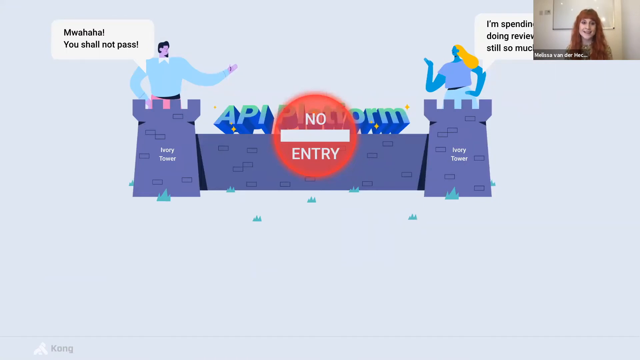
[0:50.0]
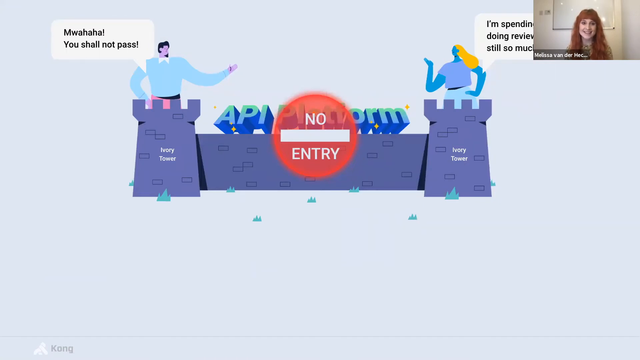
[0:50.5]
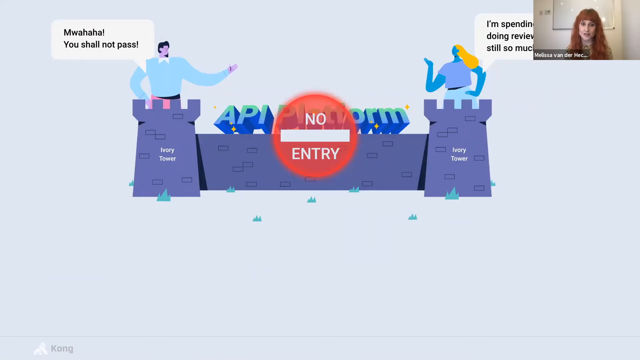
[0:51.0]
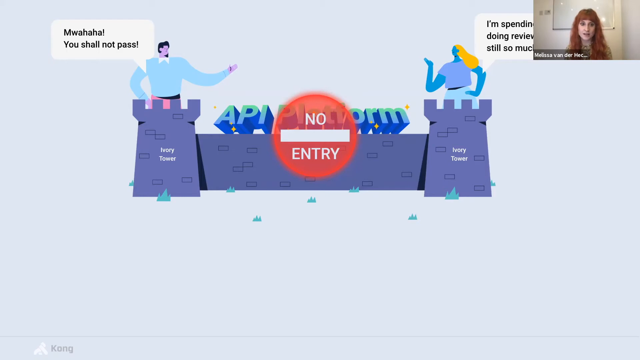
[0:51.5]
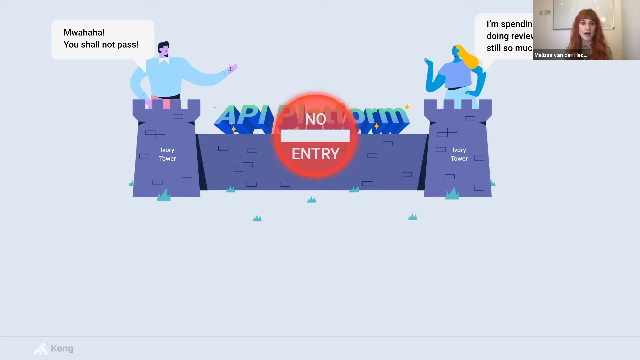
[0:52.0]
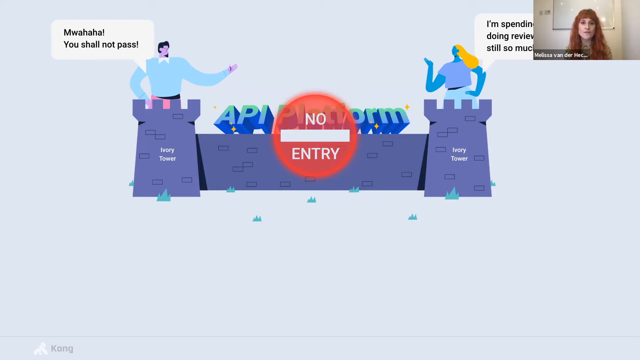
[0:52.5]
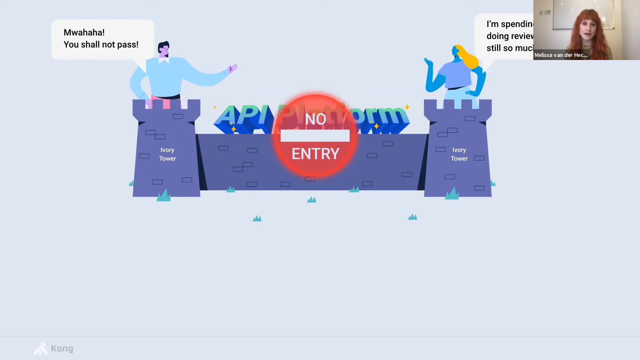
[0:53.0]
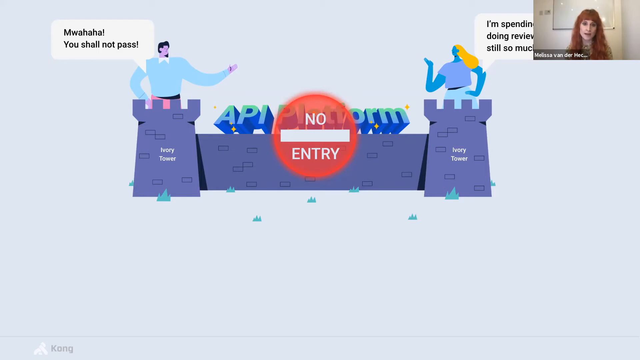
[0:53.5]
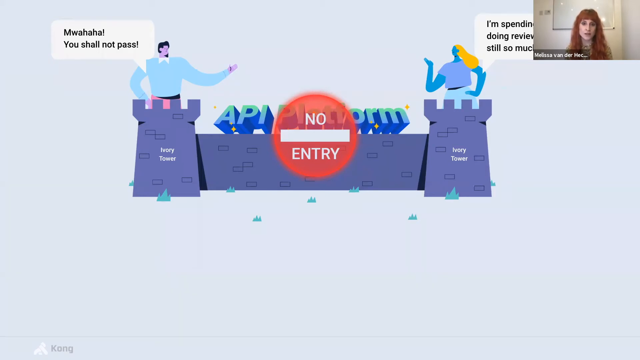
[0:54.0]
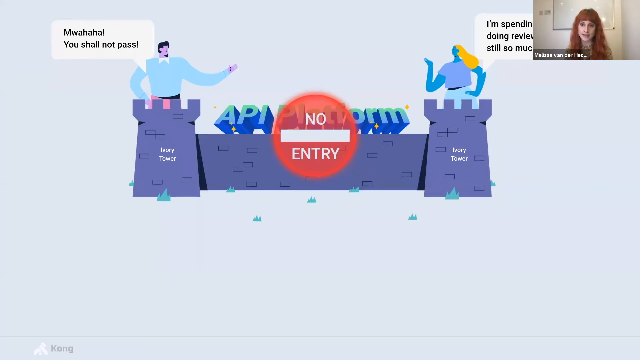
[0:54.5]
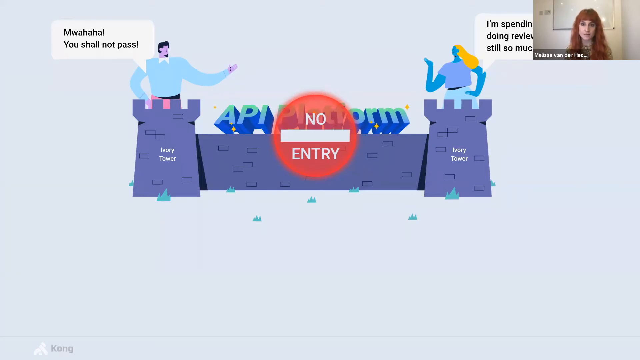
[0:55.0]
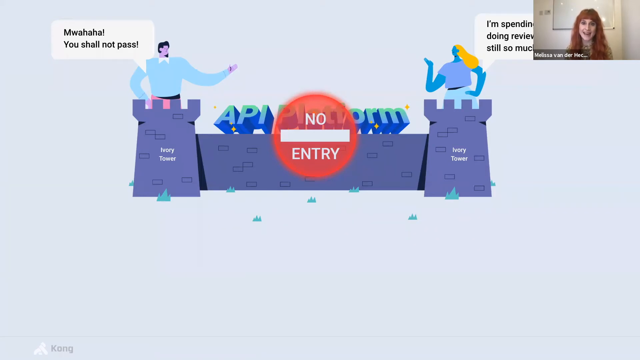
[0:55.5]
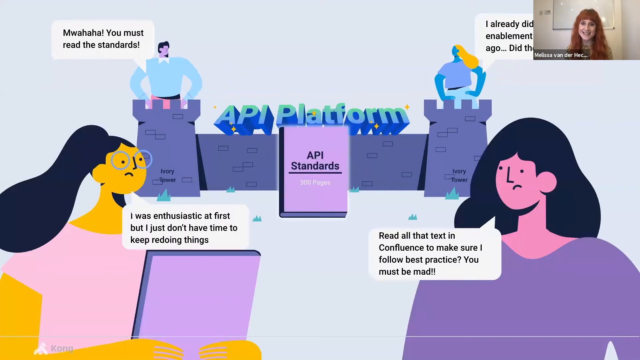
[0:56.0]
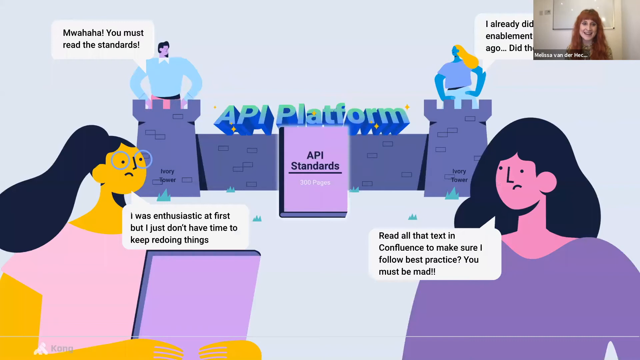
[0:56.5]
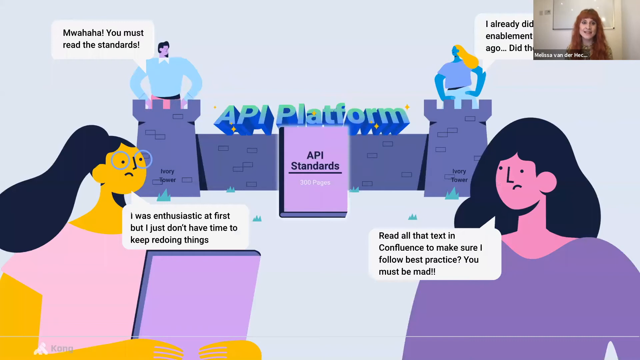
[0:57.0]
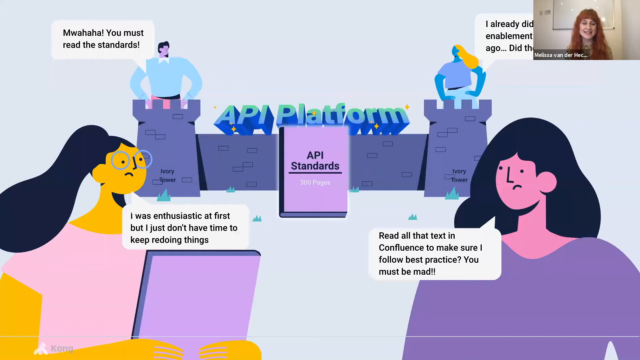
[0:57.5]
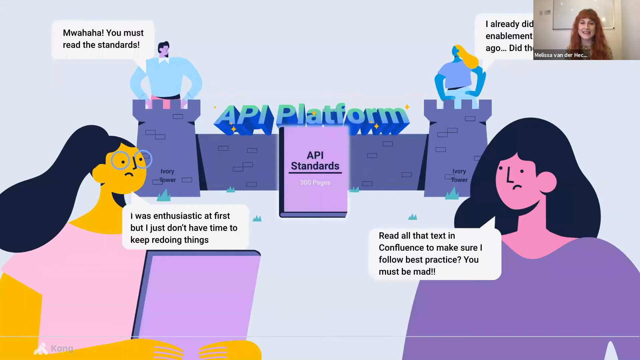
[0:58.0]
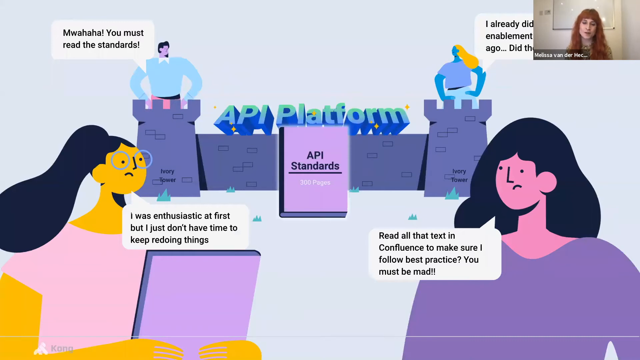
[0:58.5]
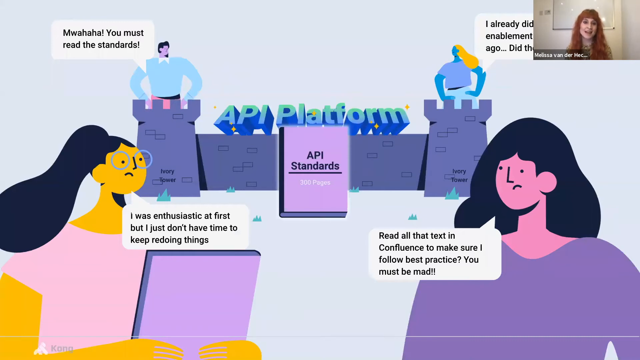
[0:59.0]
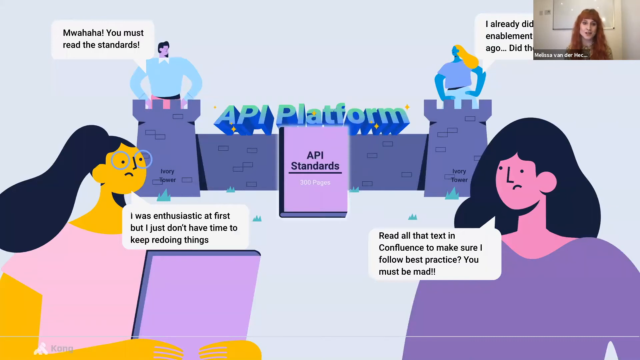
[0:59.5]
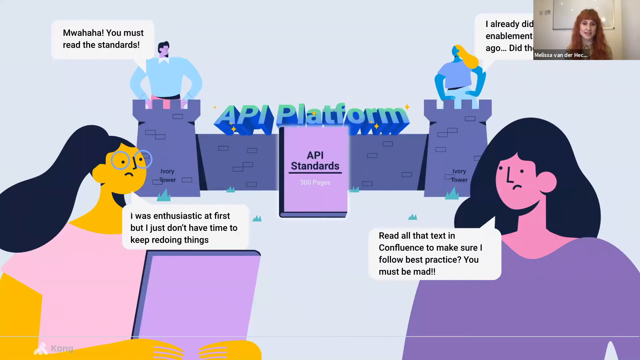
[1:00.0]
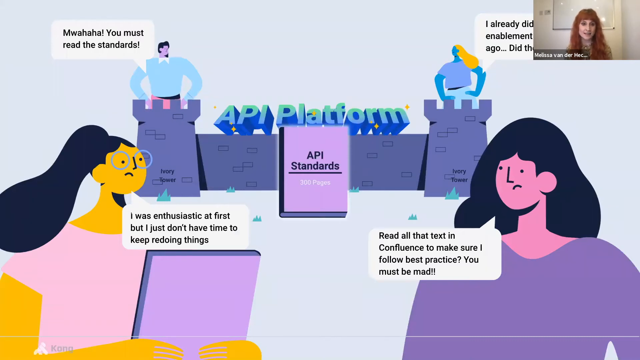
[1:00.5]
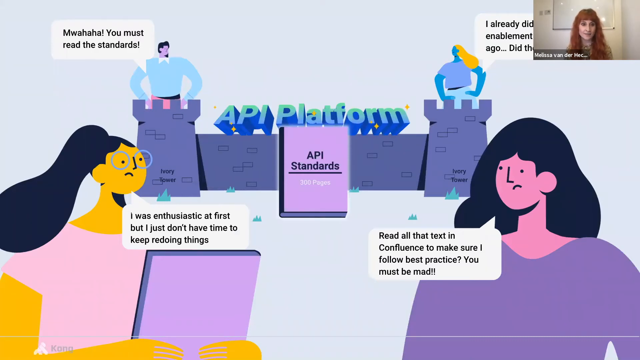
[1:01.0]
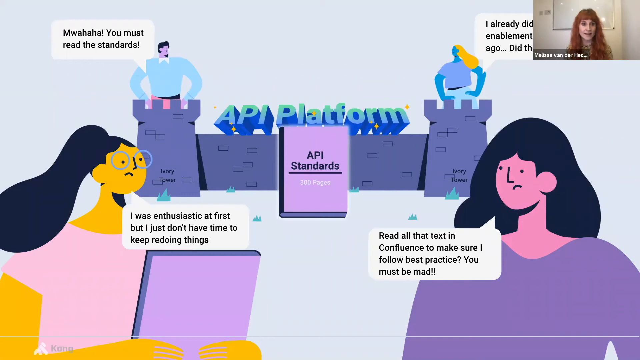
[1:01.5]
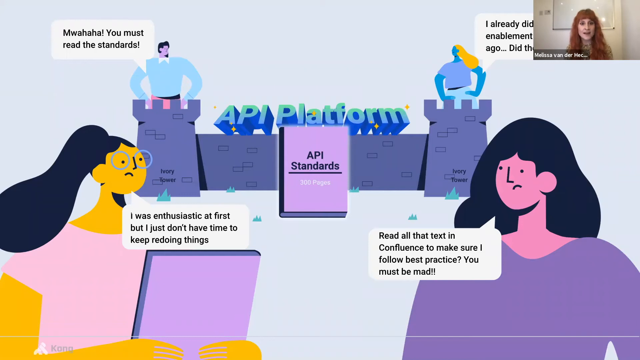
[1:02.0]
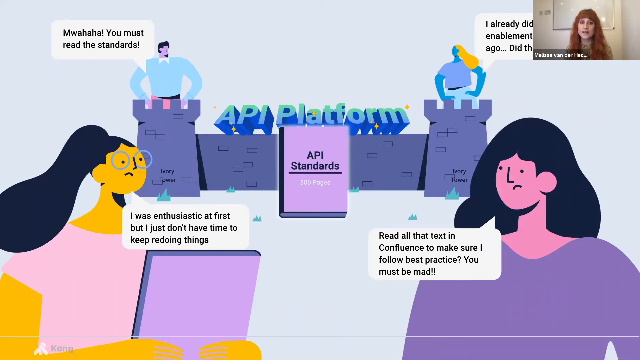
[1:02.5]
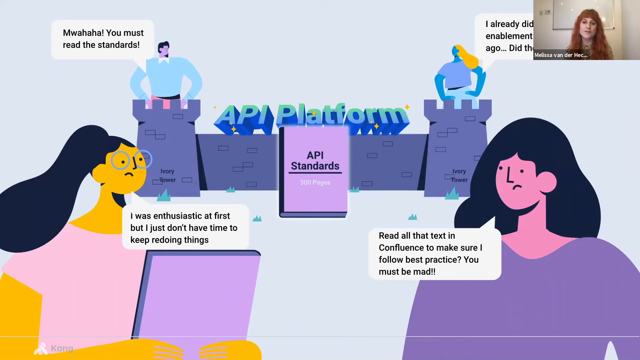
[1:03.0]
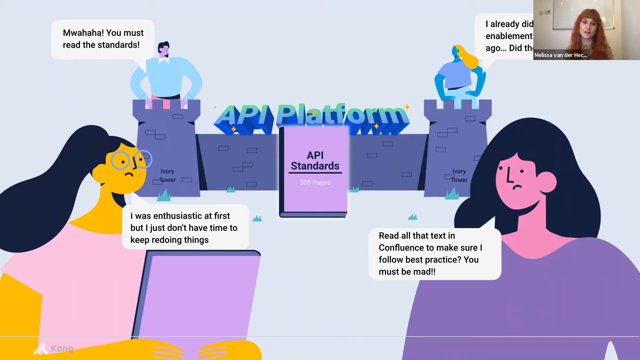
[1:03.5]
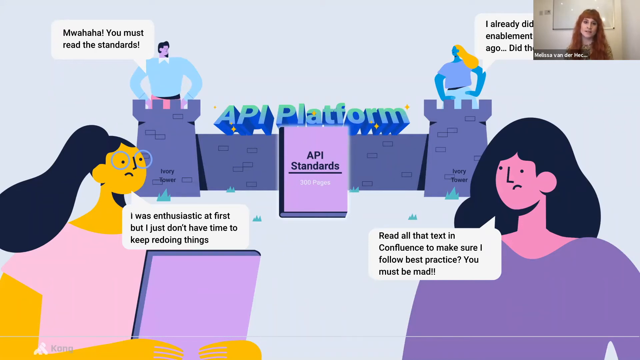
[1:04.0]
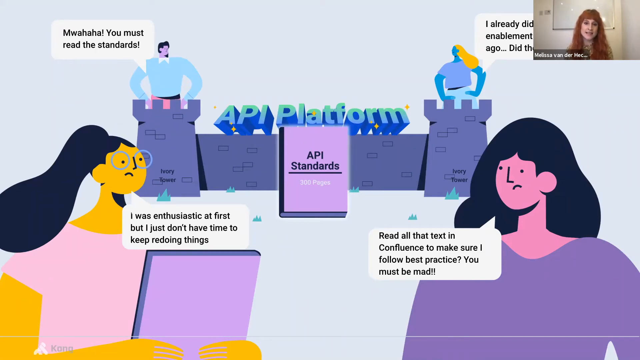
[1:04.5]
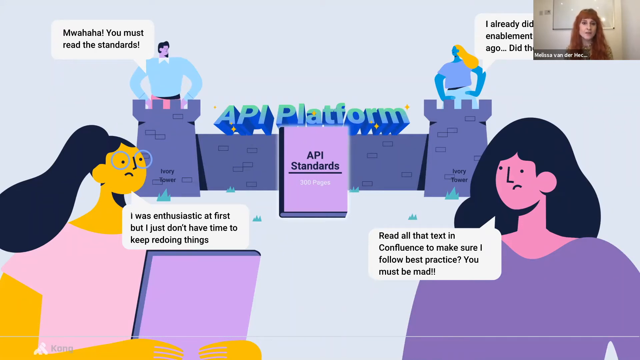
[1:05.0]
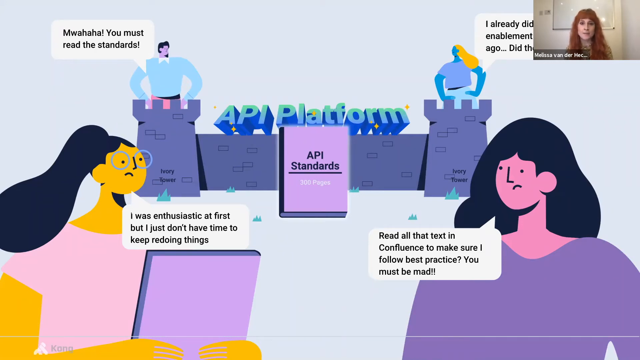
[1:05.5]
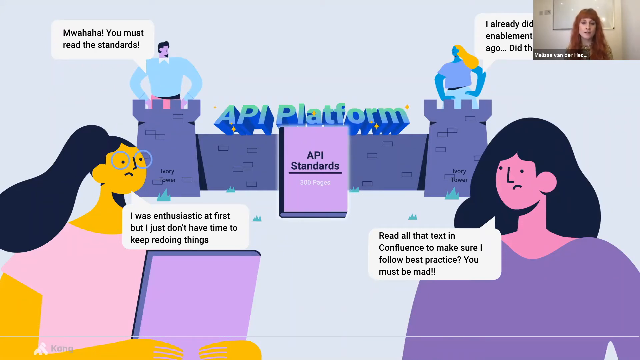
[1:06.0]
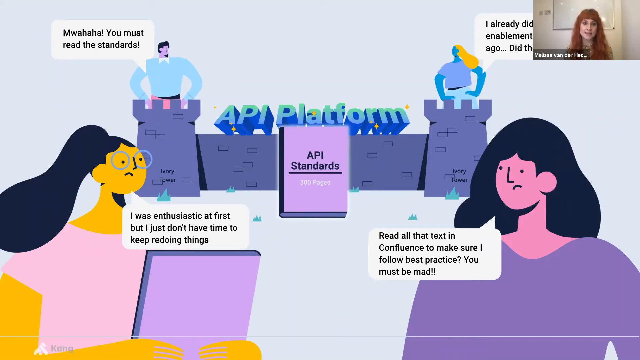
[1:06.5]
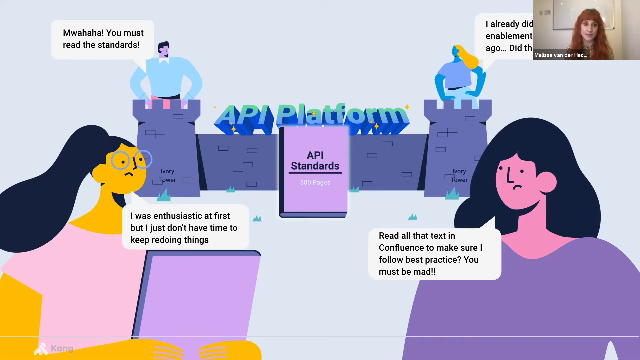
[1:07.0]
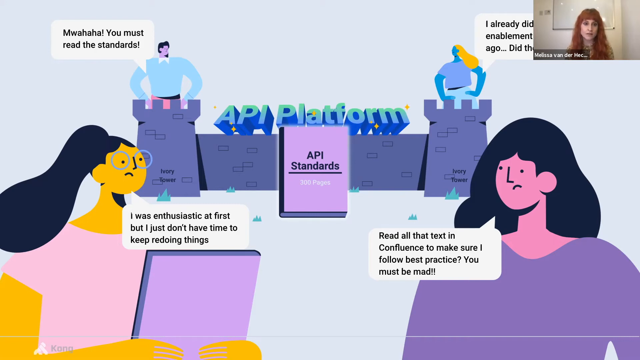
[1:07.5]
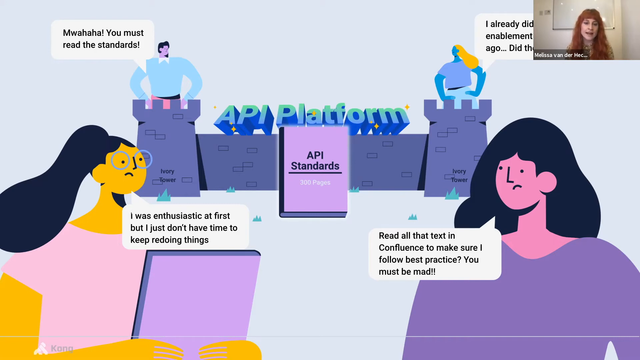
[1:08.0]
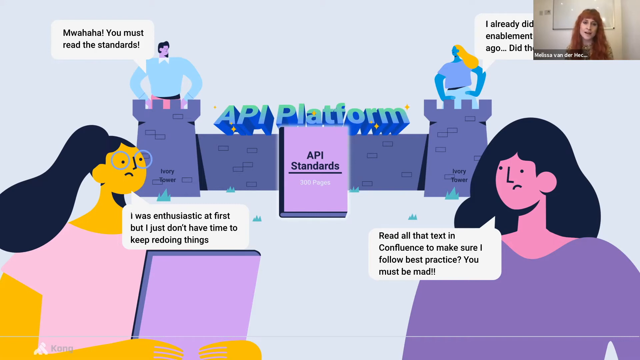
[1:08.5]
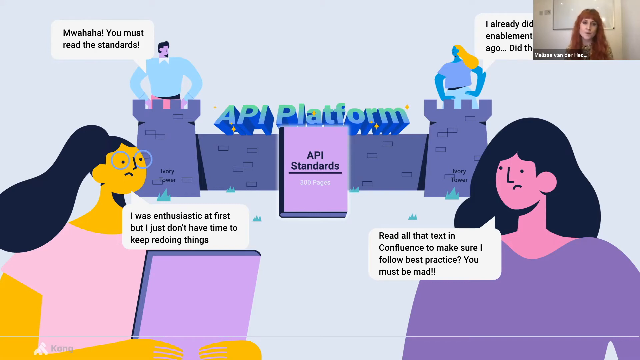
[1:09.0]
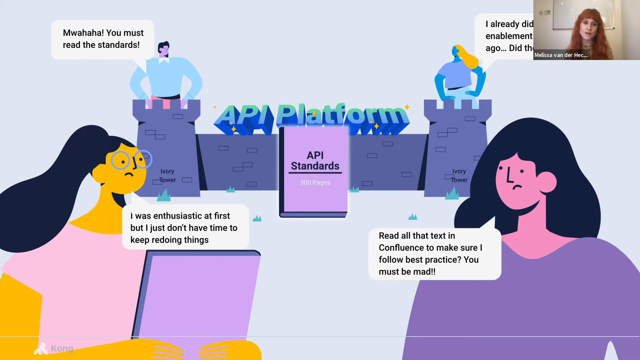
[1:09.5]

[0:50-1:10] The same slide stays on screen at first while the woman in the corner continues talking, moving her head very slightly with the movements of her lips. The slide then changes, and two vector figures appear in the foreground. The first is a woman with glasses whose speech bubble says "I was enthusiastic at first, but I just don't have time to keep redoing things." On the right, another vector woman's bubble says "read all that text in confluence to make sure I follow best practice. You must be mad." The slide remains for a few seconds while the woman continues to speak. The background behind all of the vector drawings is a very pale bluish-white, as if they sort of exist in a void. At the very end, a purple vector drawing of a book appears in the middle of the slide, with "API standards, 200 pages" on it.